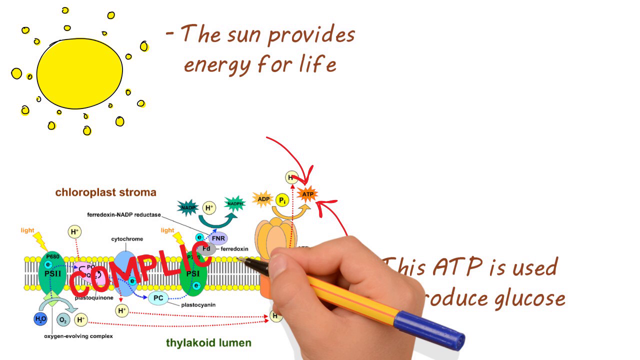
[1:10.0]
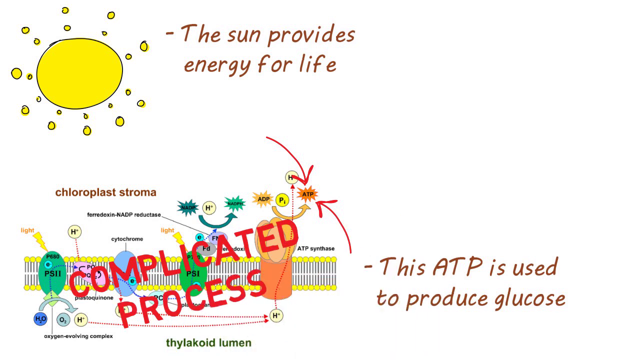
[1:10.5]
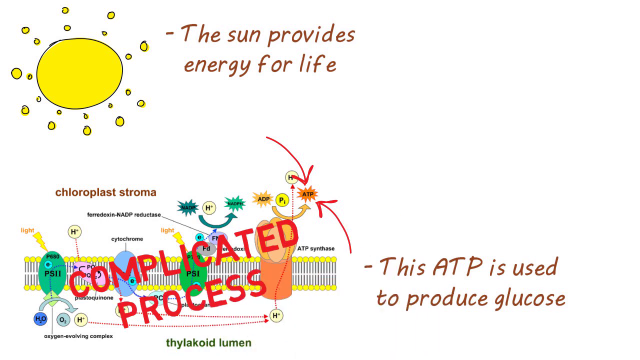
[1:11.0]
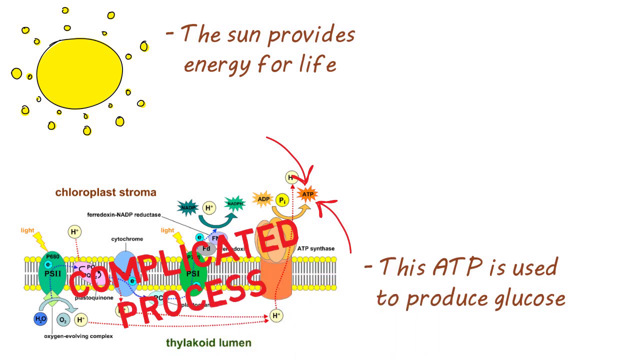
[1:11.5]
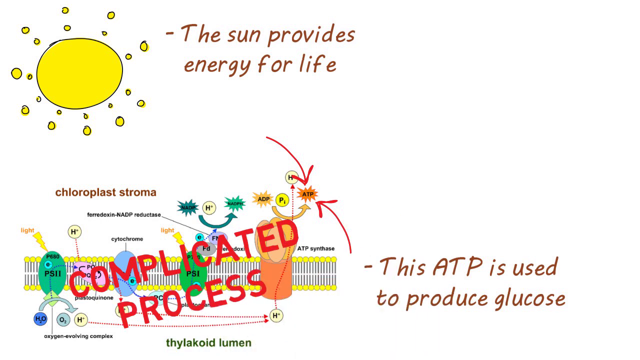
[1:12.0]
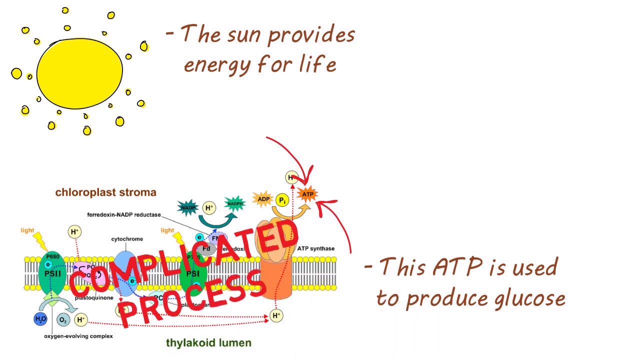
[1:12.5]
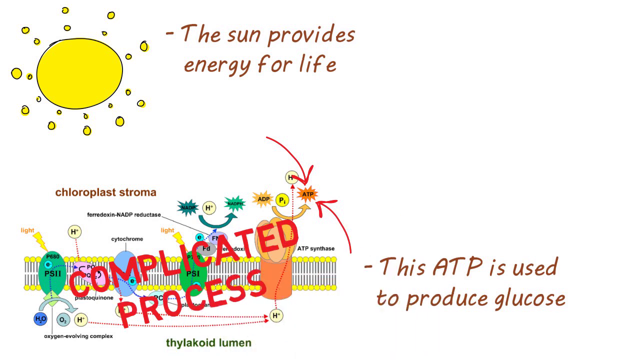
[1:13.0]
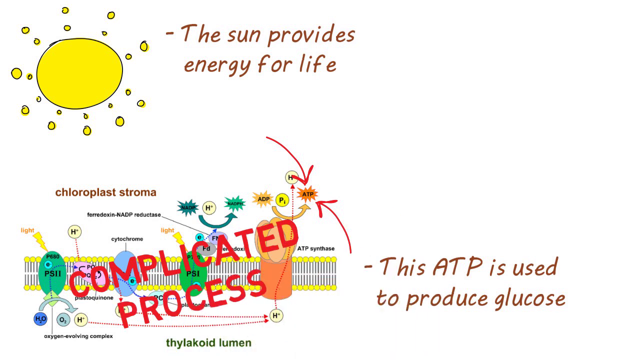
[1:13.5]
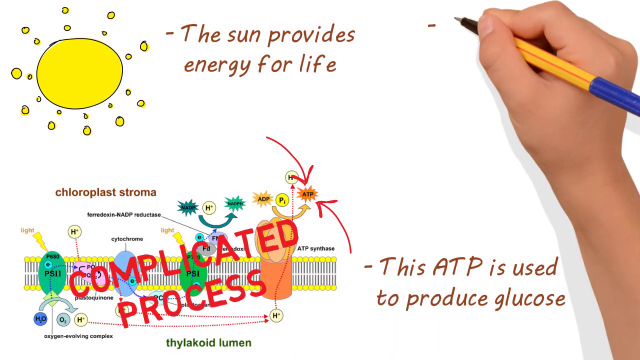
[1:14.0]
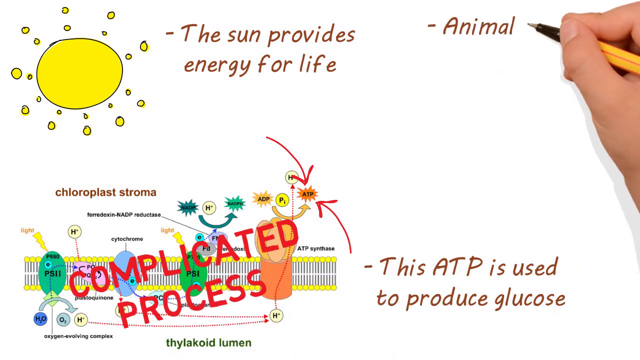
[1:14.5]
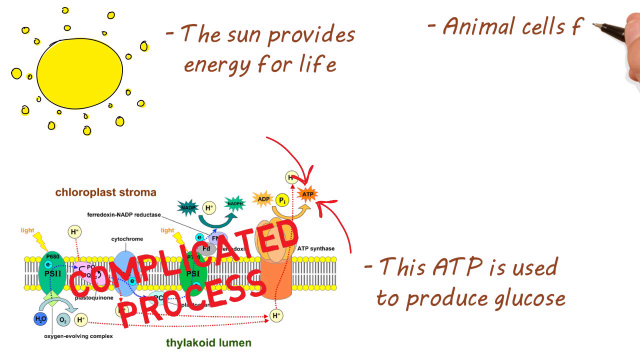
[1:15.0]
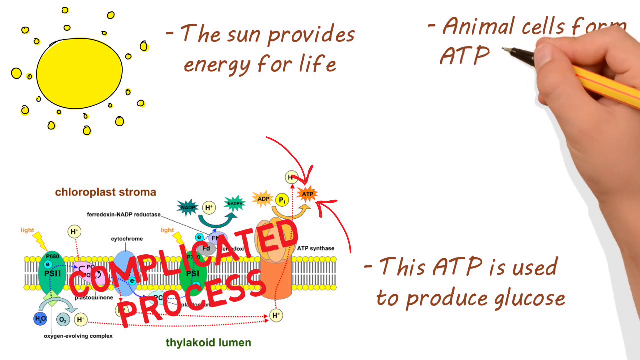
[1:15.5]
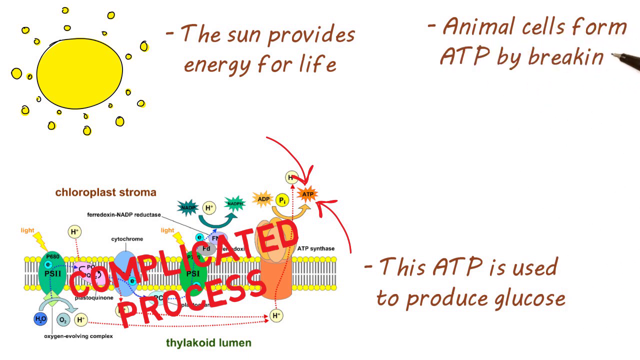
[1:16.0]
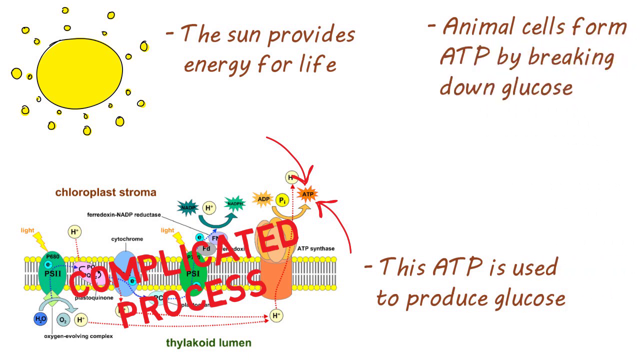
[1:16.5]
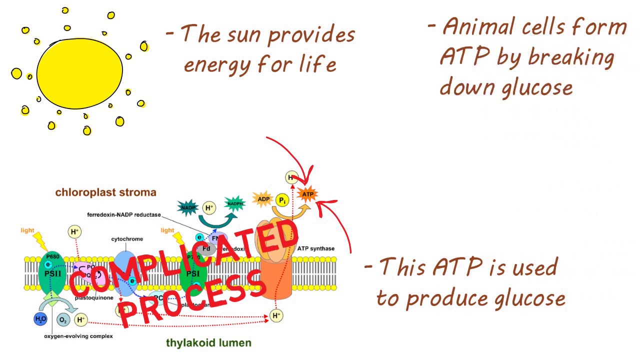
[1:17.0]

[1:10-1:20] A drawing is in the upper left corner of the screen, with the text "provides energy for life." Underneath is a picture of the chloroplast stroma, with each of its parts drawn out. Above that is written "complicated process." To the right, text says "this ATP is used to produce glucose." In the upper right corner of the screen are the words "animal cells form ATP by breaking down glucose."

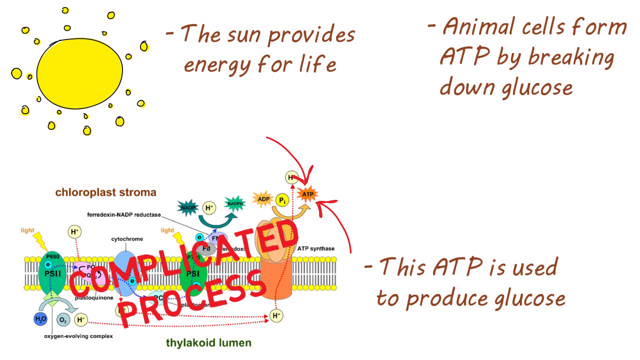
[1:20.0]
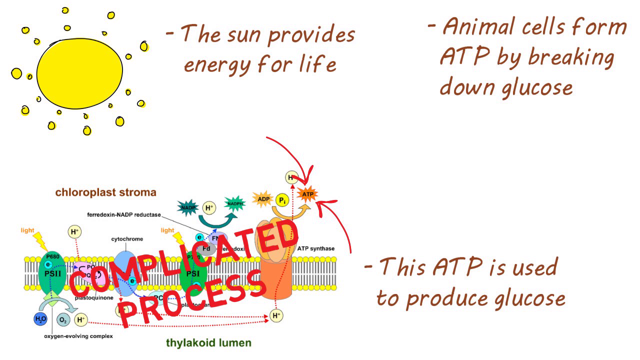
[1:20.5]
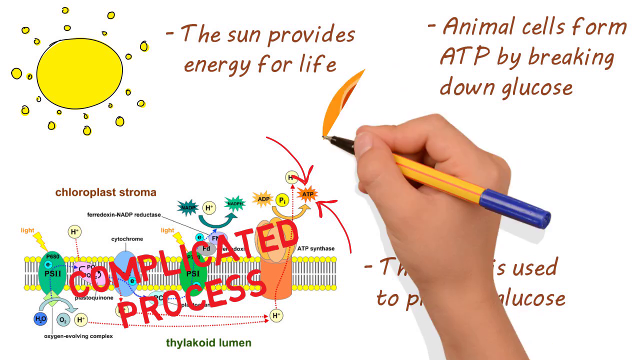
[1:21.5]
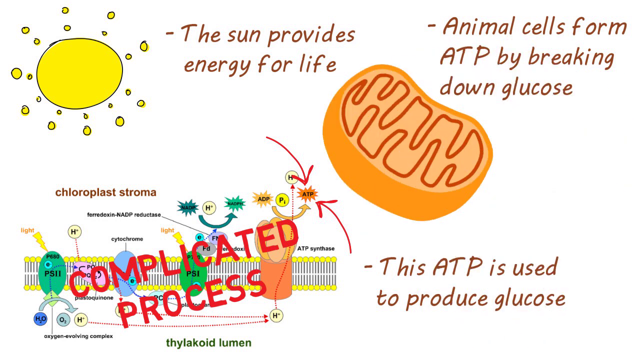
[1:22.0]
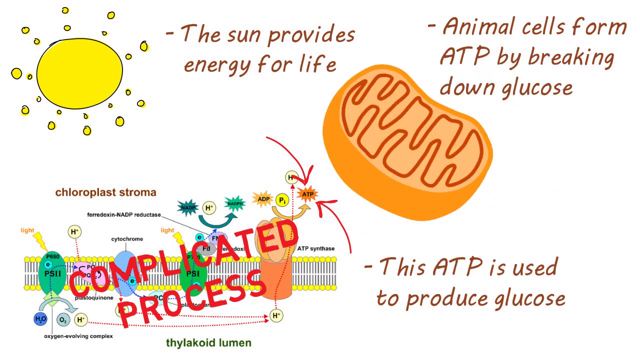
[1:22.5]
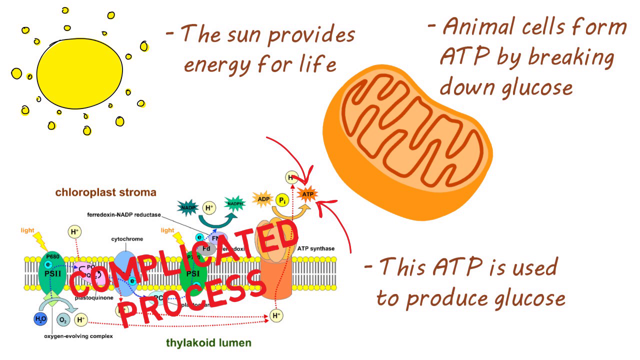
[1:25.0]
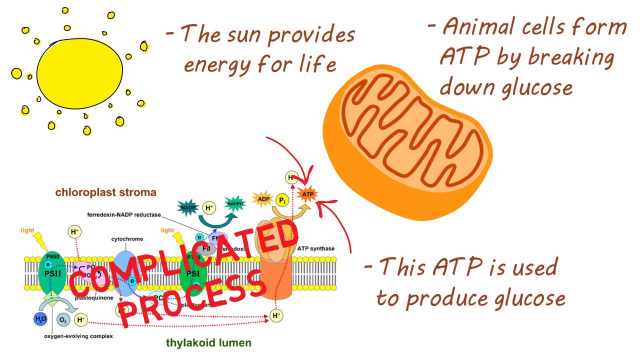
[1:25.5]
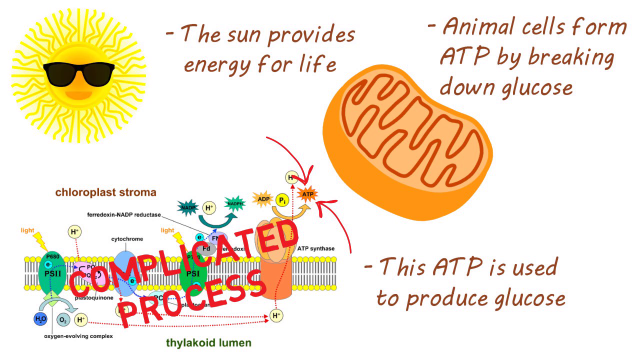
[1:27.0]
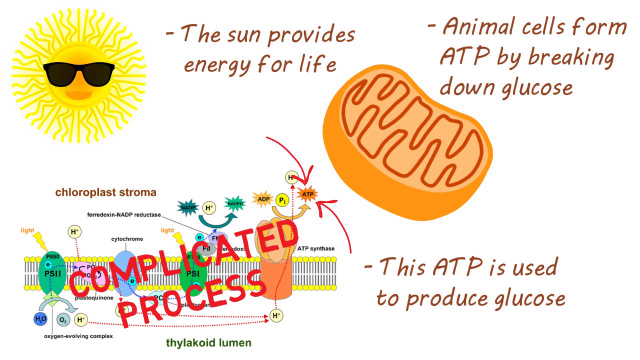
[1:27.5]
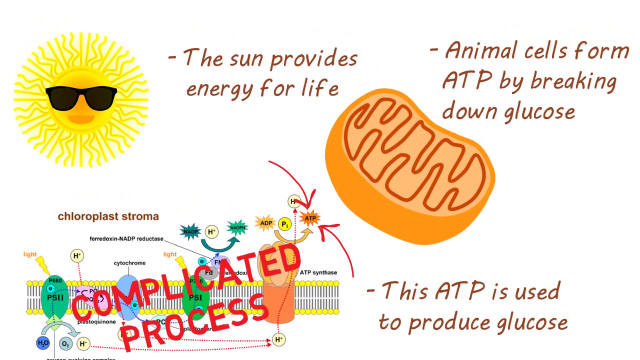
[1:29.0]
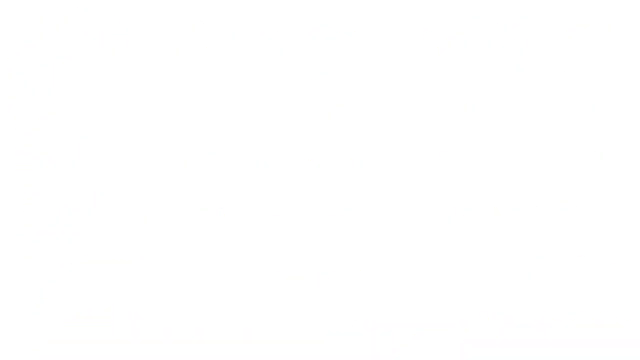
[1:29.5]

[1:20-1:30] The screen shows that the sun provides energy for life, with the chloroplast stroma process drawn out in images underneath. Above that are written the words "it is a complicated process." In the upper right, text says "animal cells form ATP by breaking down glucose," and in the lower right part of the screen it says "this ATP is used to produce glucose." Next, what appears to be a glucose cell is drawn, and a pair of sunglasses is put over the drawn sun.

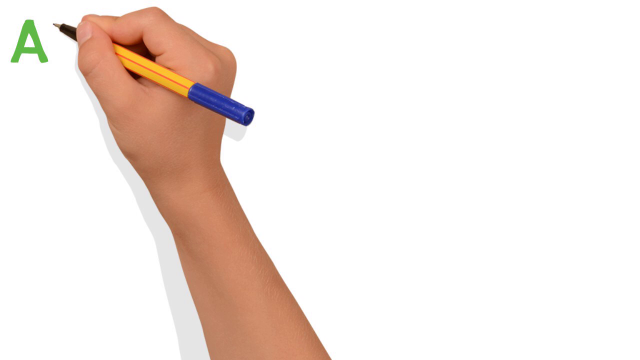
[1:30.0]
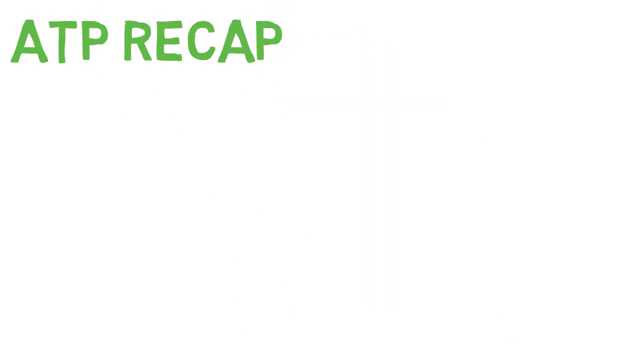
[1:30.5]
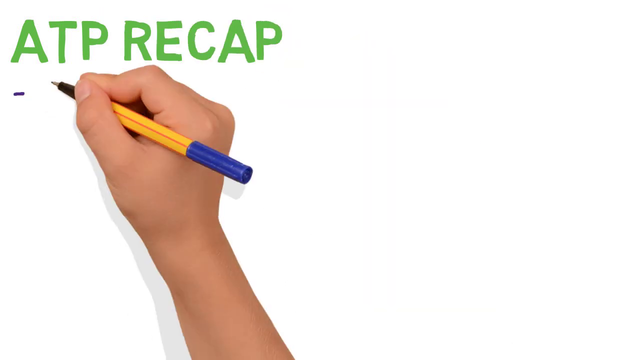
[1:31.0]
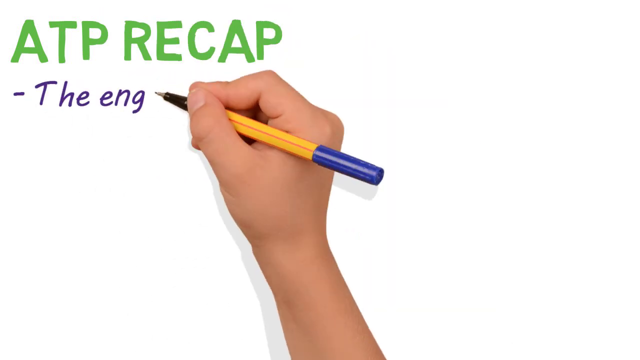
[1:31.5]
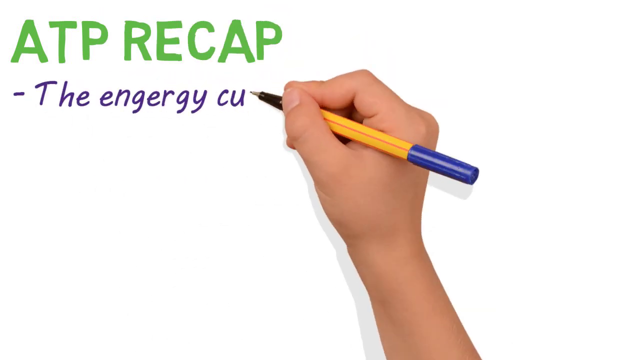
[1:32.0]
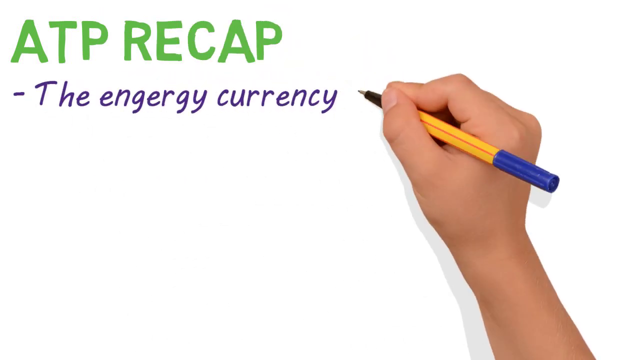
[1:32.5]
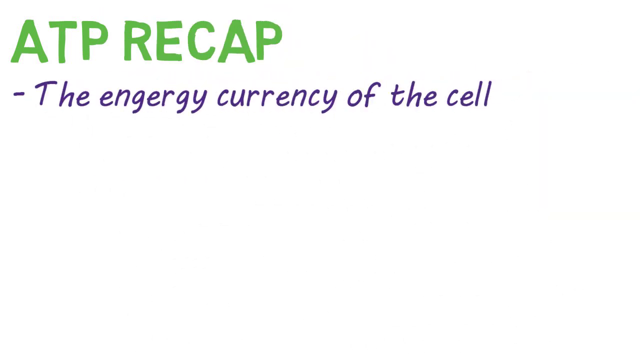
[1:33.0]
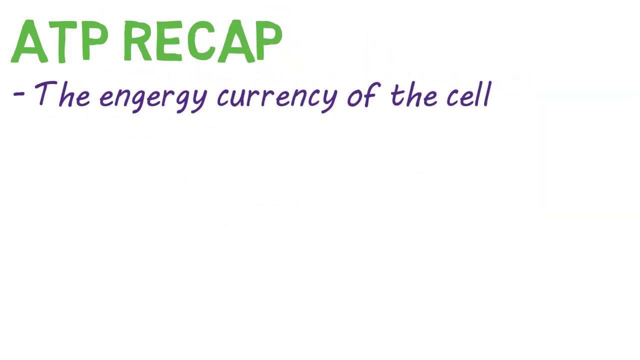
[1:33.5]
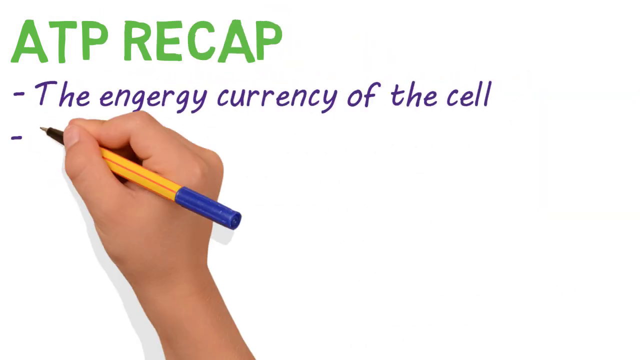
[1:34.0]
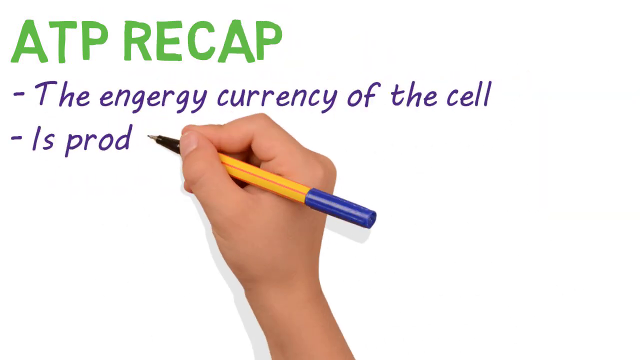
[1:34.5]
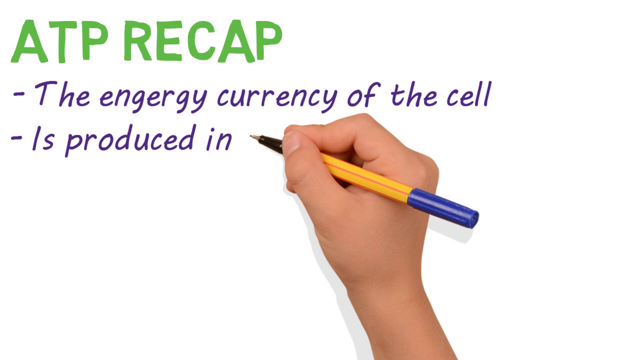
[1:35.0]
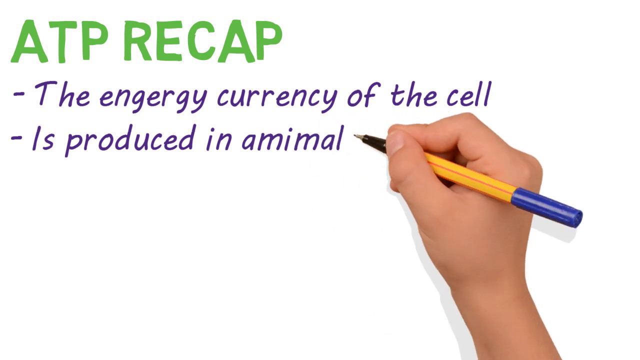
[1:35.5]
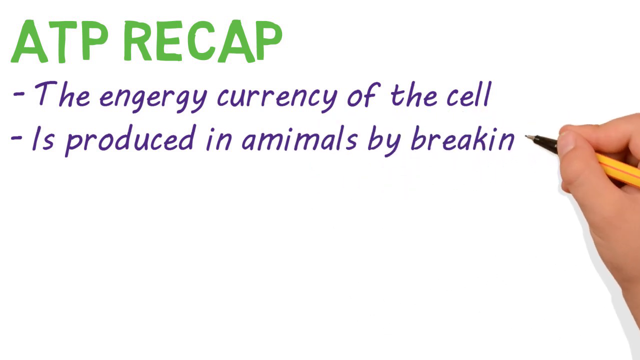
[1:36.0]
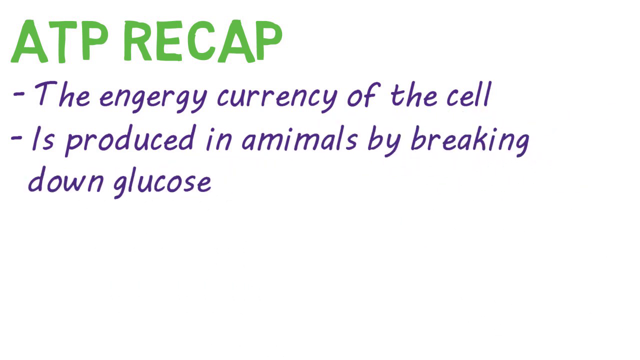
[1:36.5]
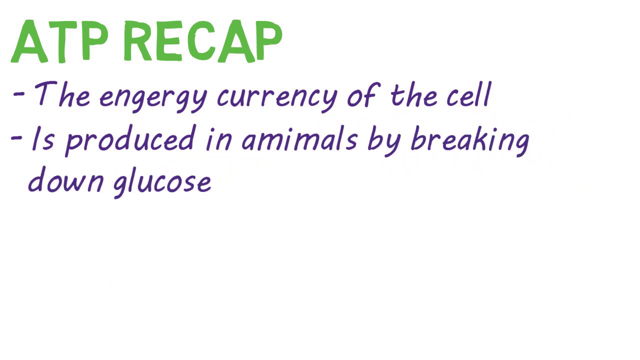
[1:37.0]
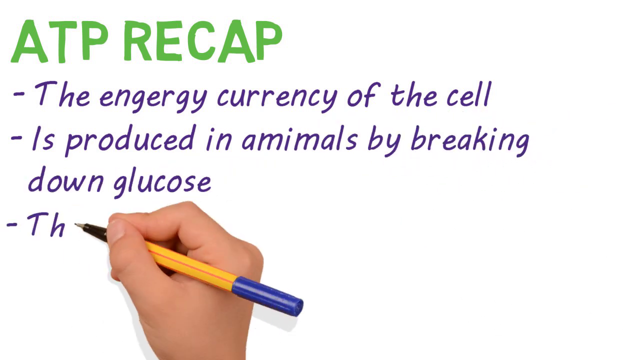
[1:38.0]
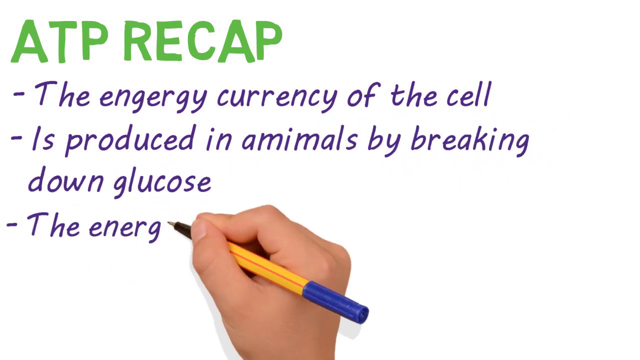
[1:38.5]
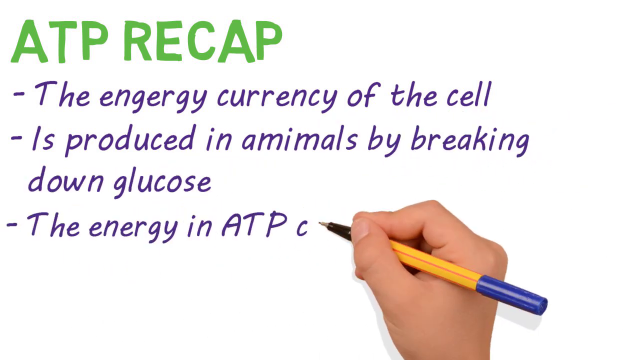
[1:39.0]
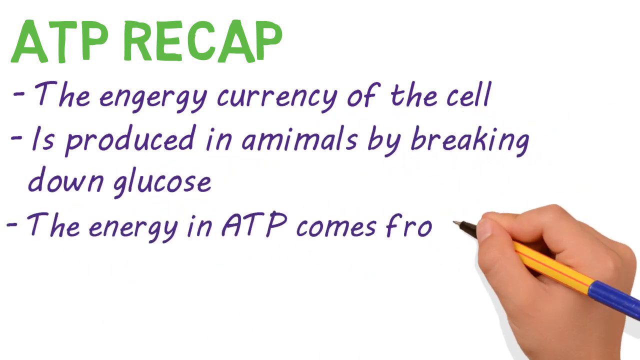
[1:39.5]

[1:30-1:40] An animated, human-looking hand holding a pen or pencil writes words on the screen, drawing them from left to right: "ATP recap," "the energy currency of the cell," "is produced in animals by breaking down glucose," "the energy in ATP comes from the sun."